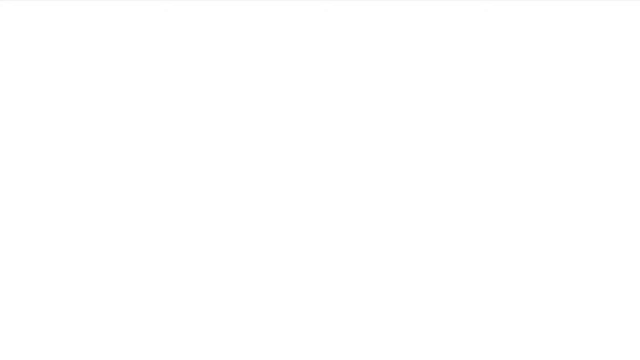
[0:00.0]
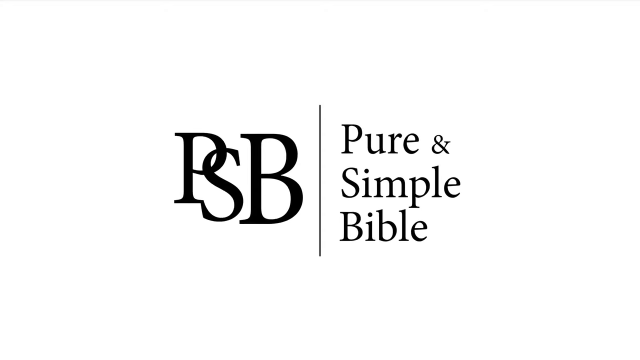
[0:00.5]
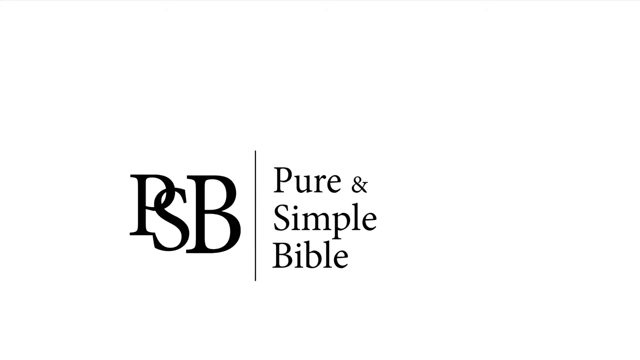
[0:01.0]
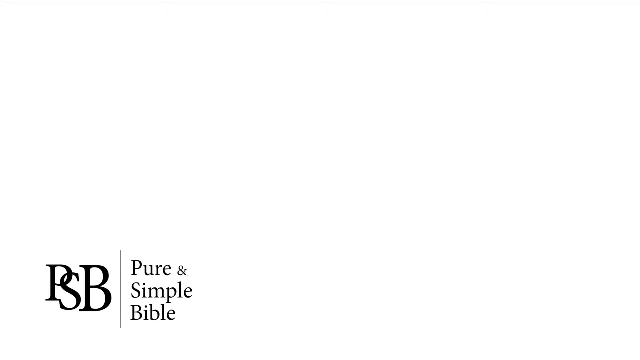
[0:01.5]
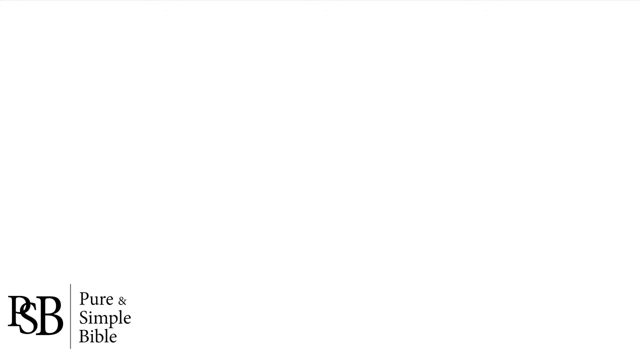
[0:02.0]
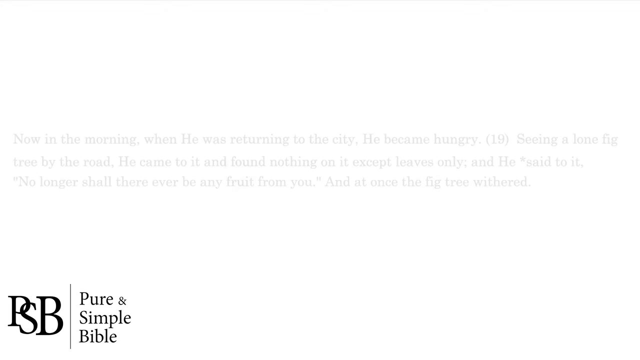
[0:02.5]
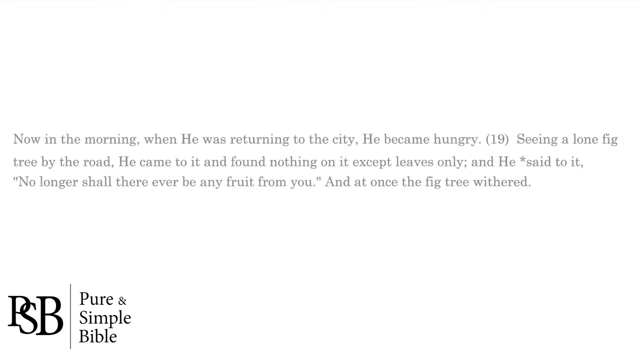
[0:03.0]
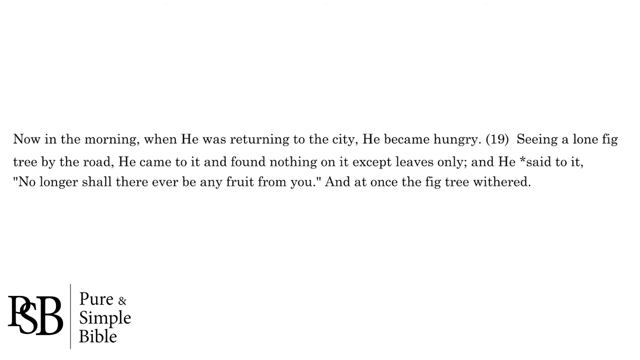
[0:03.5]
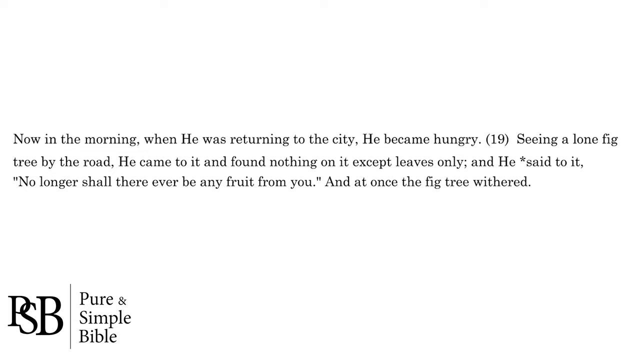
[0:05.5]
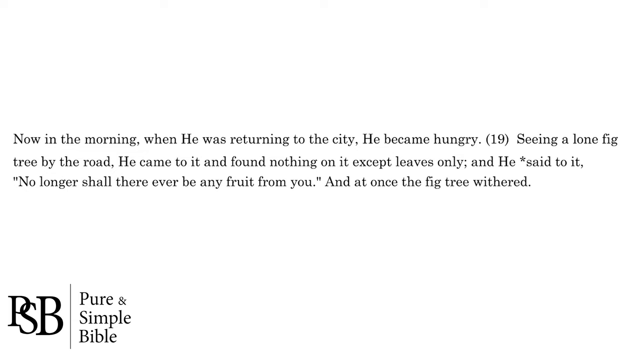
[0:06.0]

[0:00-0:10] The letters "PSB" and the words "pure and simple Bible" appear in the middle of the screen, then move swiftly to the bottom left corner. Next, a passage of verses appears that reads: "Now in the morning, when he was returning to the city, he became hungry. 19. Seeing a lone fig tree by the road, he came to eat and found nothing on it, except leaves only. And he said to it, no longer shall there ever be any fruit from you. And at once the fig tree withered." The words are written in a small, neat black font on a white background.